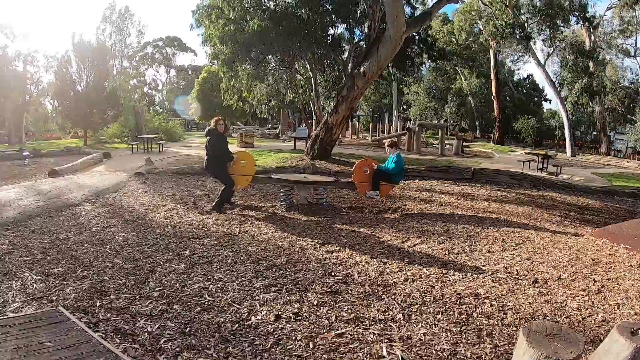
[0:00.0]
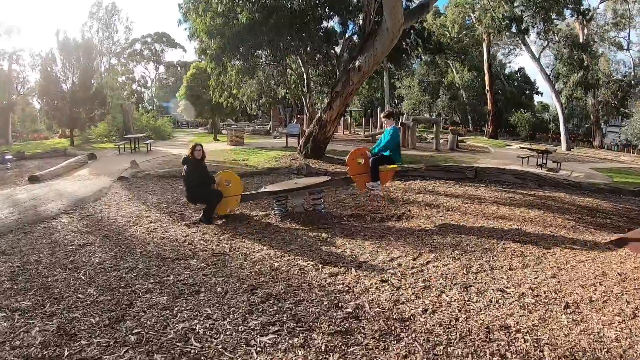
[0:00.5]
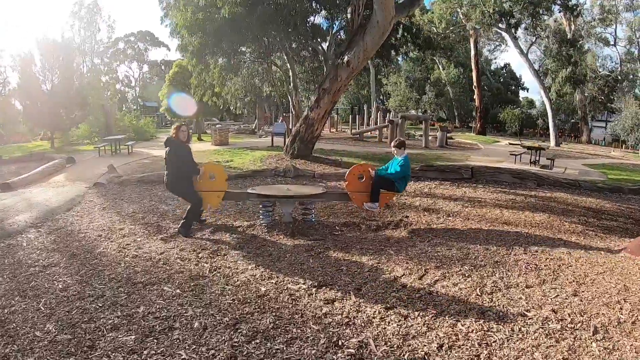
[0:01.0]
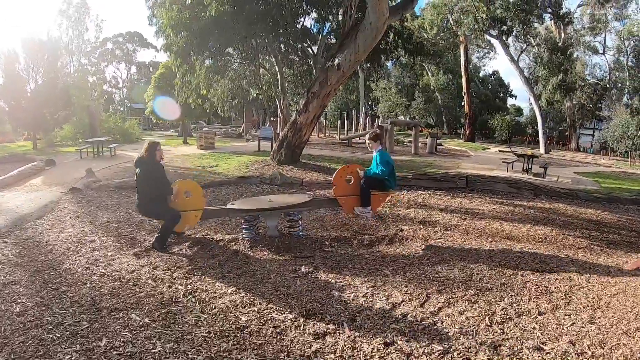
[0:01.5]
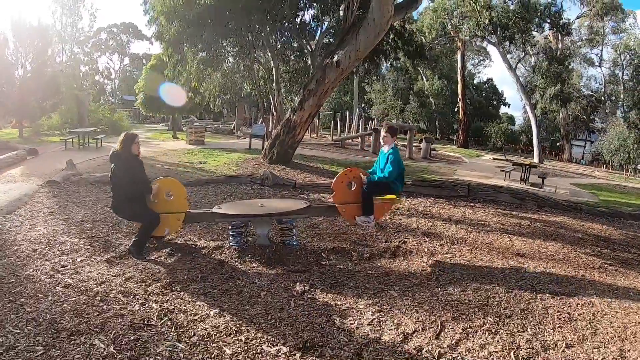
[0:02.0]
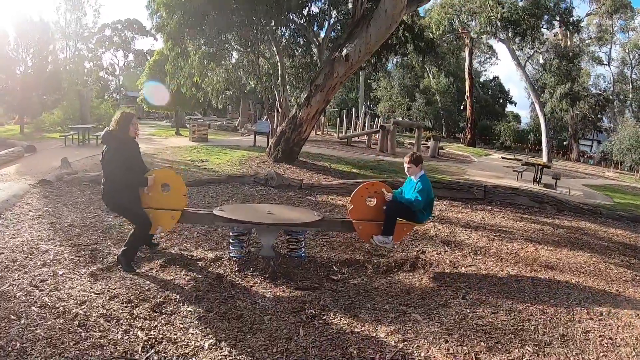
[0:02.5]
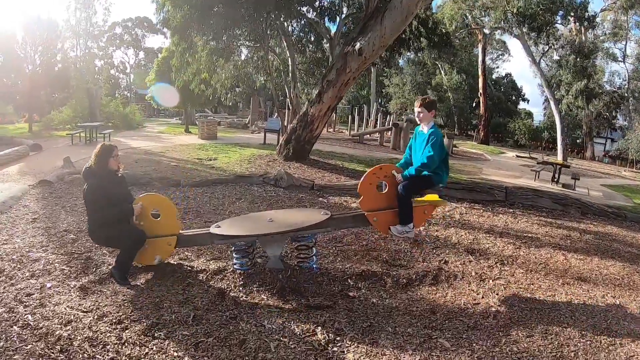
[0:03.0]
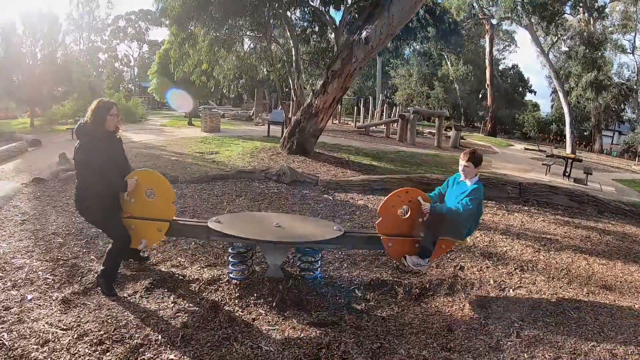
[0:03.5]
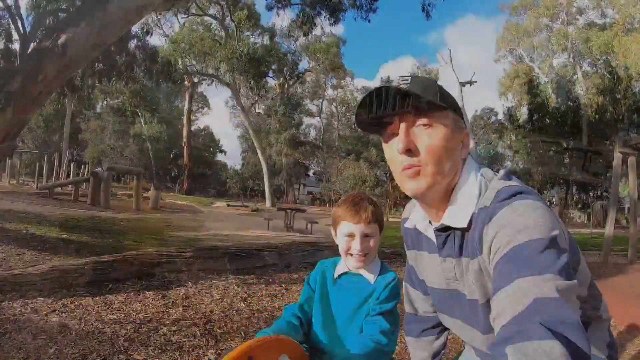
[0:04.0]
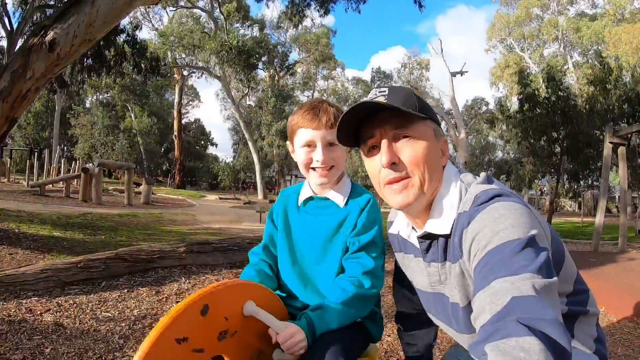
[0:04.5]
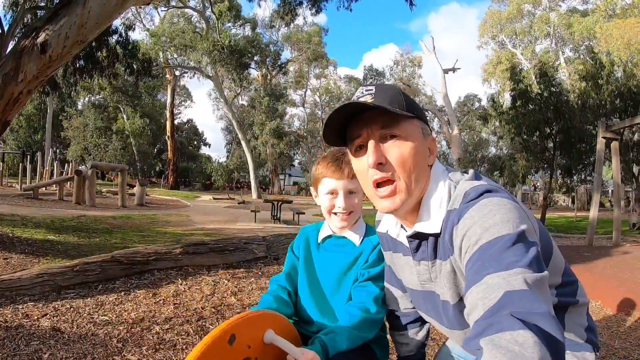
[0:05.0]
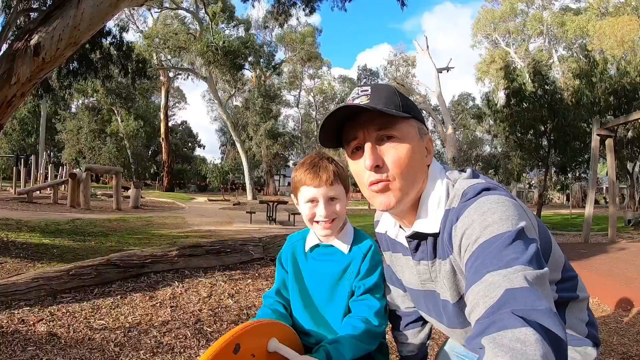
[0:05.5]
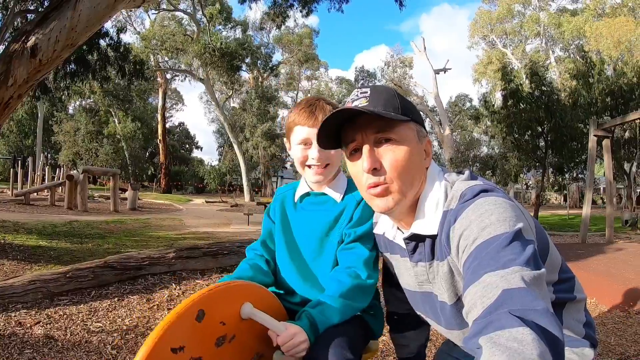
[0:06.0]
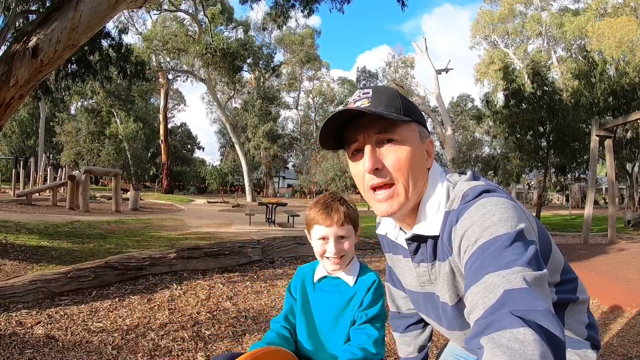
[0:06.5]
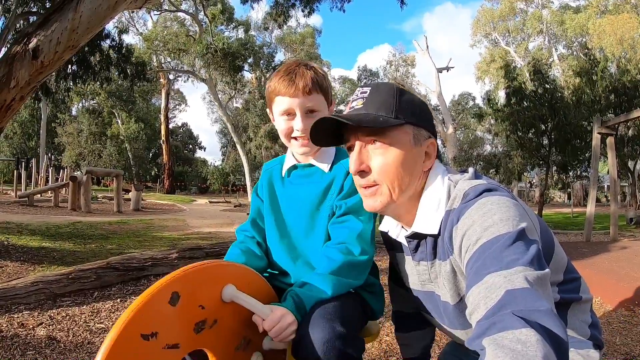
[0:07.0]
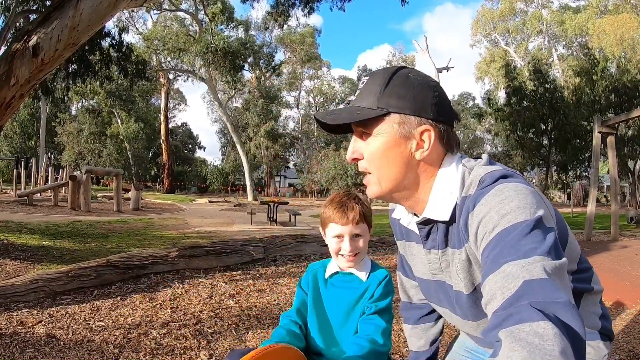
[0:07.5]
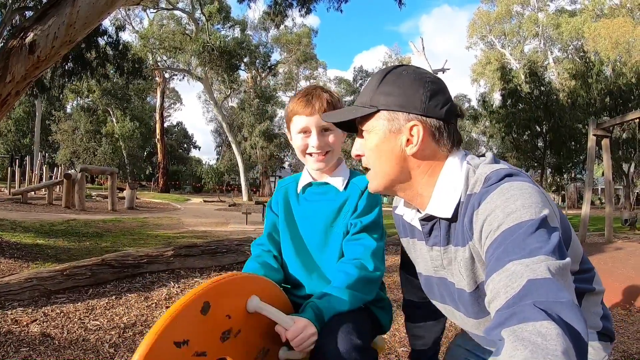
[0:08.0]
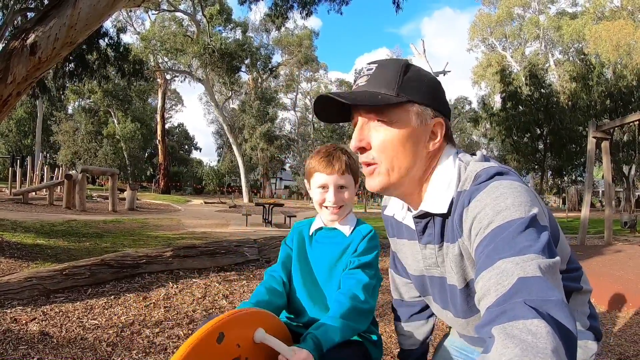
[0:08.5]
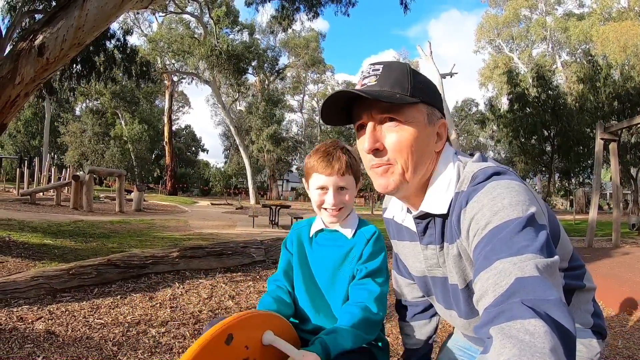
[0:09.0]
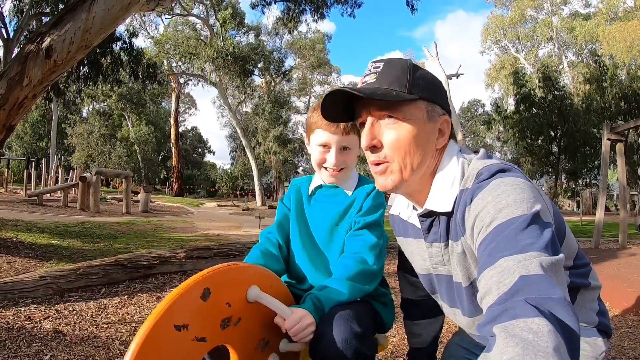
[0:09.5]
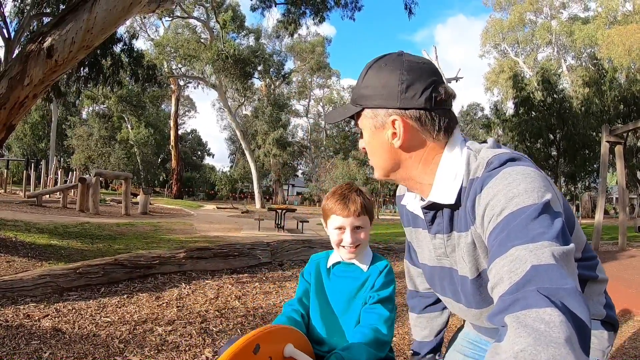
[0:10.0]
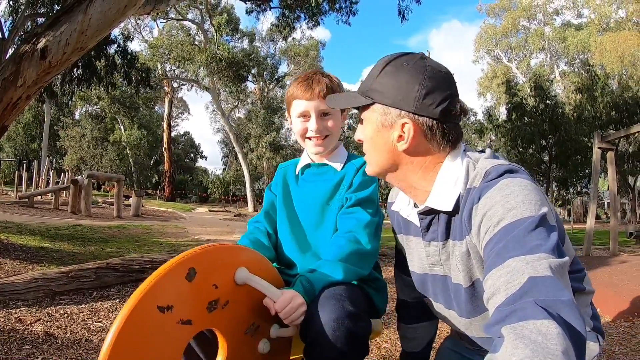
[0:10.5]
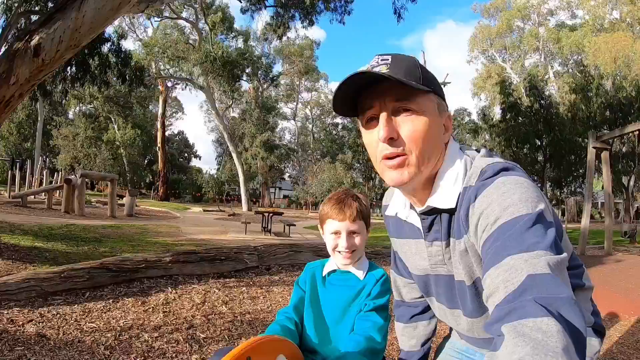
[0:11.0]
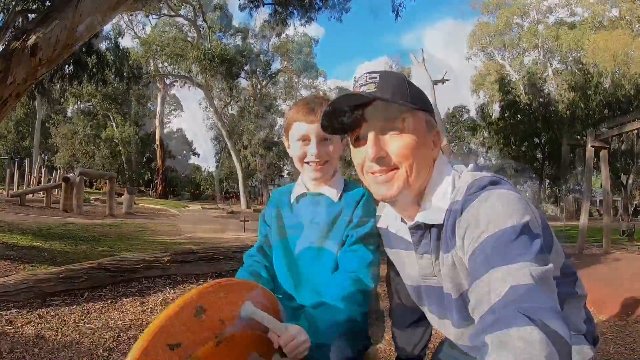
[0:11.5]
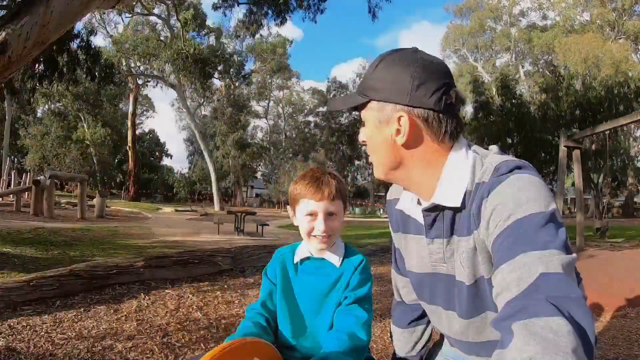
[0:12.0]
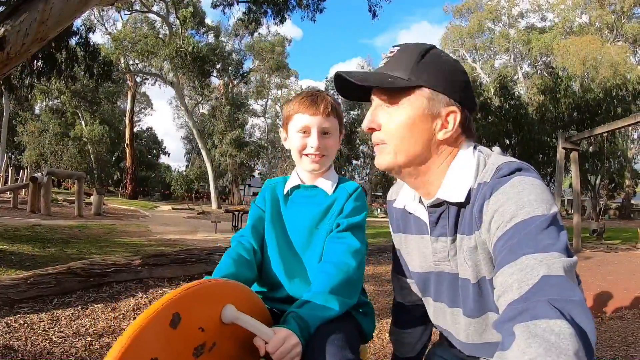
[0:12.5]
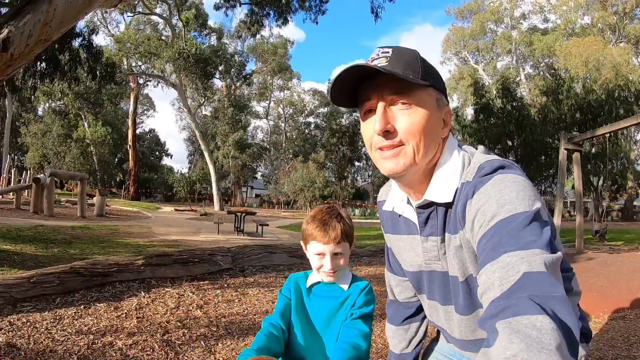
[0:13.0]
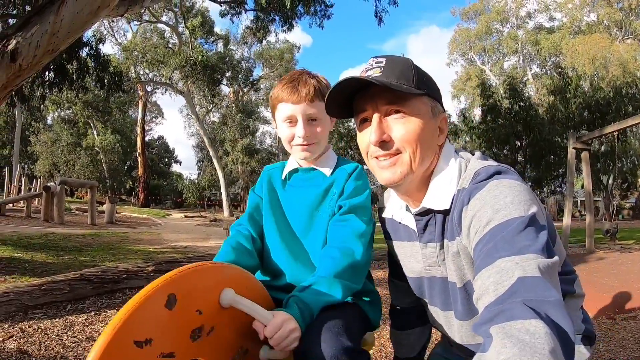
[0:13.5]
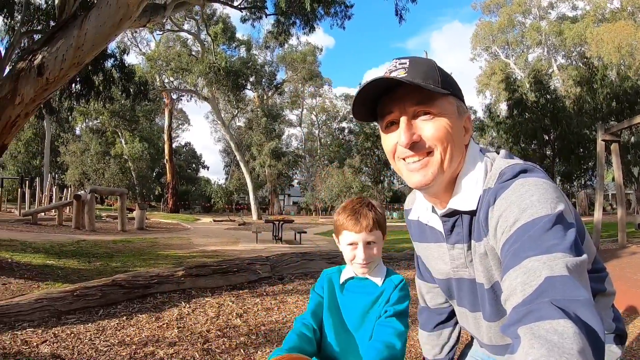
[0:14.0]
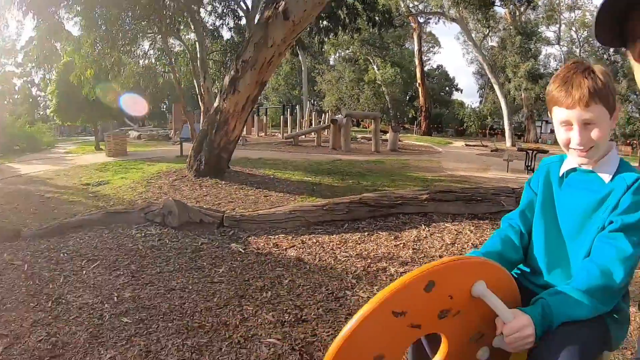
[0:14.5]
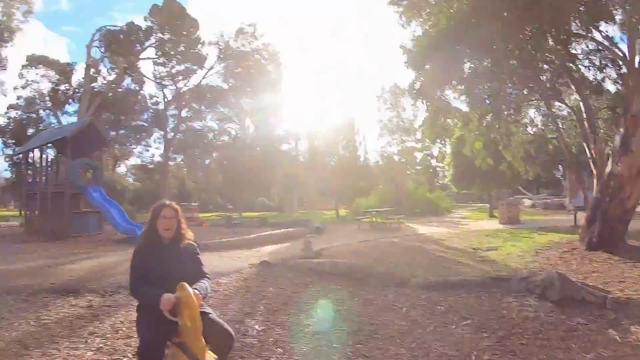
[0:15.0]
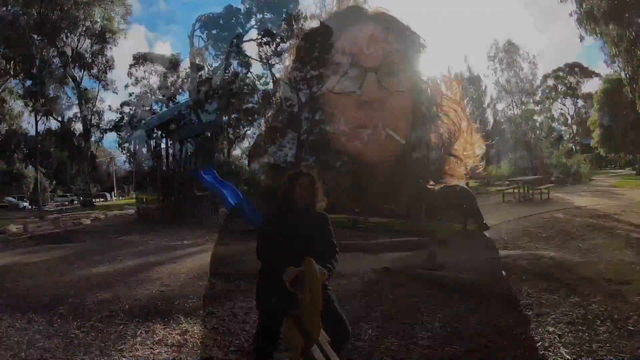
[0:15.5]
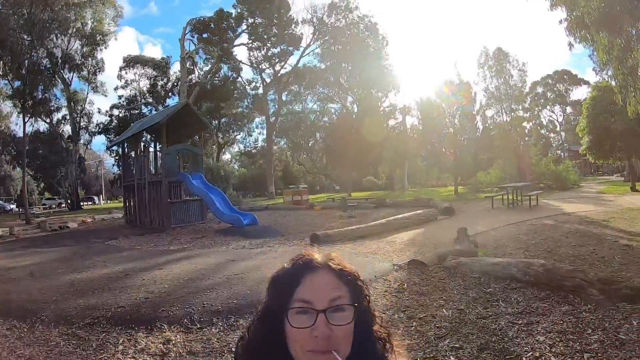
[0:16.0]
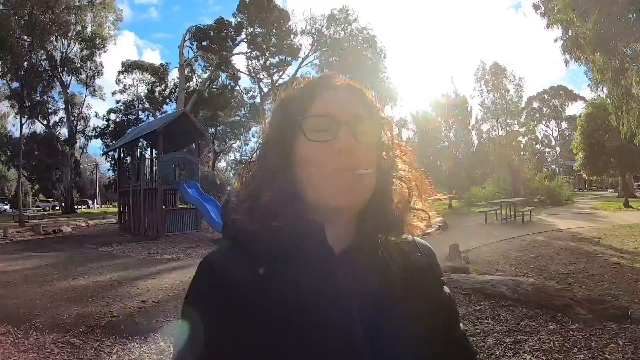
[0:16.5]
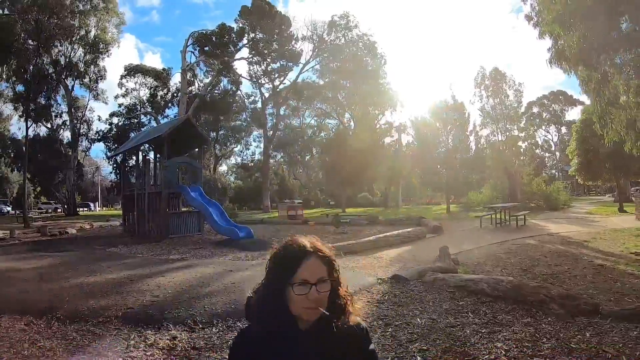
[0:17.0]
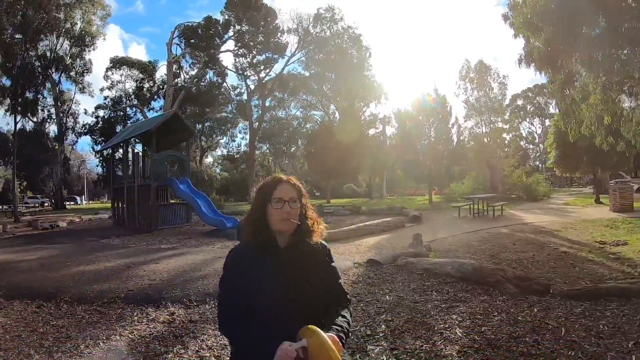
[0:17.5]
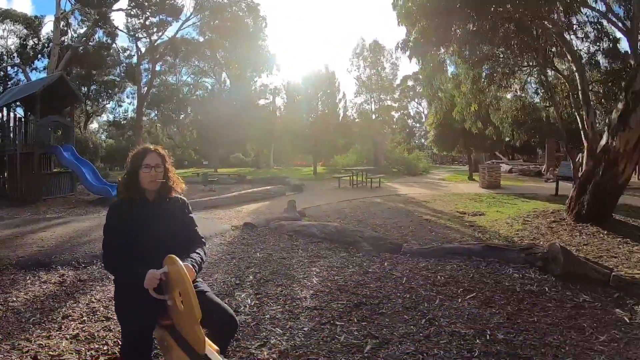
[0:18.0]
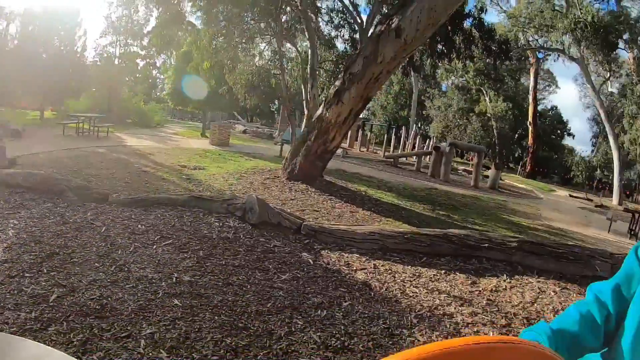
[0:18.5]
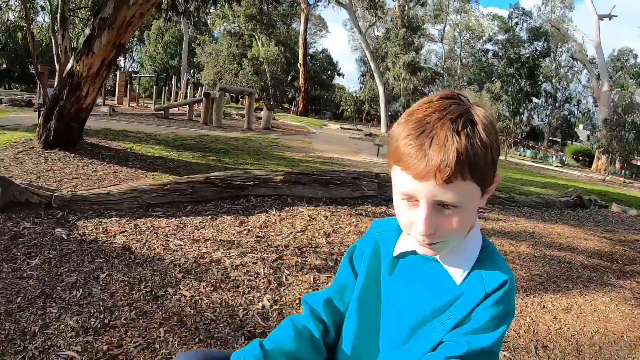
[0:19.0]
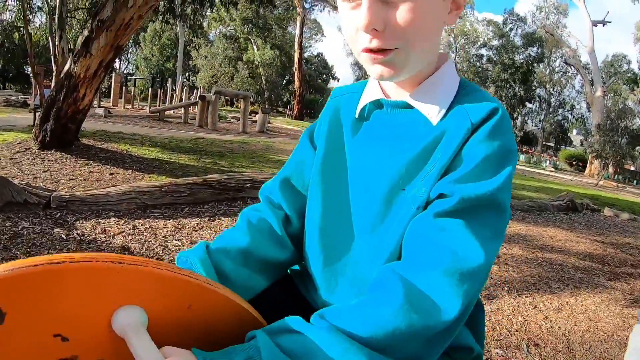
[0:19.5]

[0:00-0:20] A sunny park has many trees, walkways, a picnic table and a play area. In the background there is what looks like a slide and a climbing toy, and another picnic table. In the foreground, a woman is on one end of a seesaw and a small boy plays on the other end. After a cut, the same little boy appears with what looks like a man in a polo shirt and a baseball cap, the two of them shown on just their end of the seesaw. Behind them are a blue sky with some clouds, lots of trees, walkways, picnic areas and another climbing attraction to the left. The man in the striped polo and hat speaks to the camera while the boy, who is red-headed and wears a light azure blue sweater, grins and enjoys the seesaw. There is another cut of him, then the shot switches to the woman on the other side of the seesaw, and then back to the boy on the seesaw.